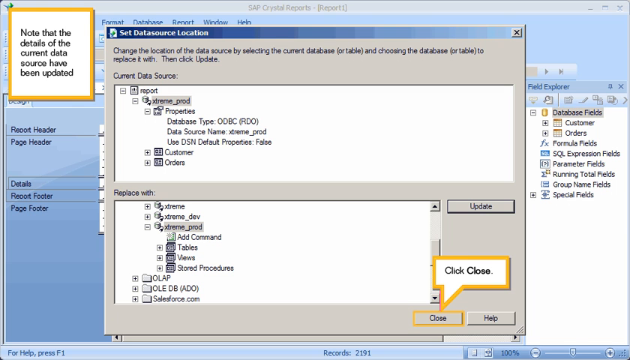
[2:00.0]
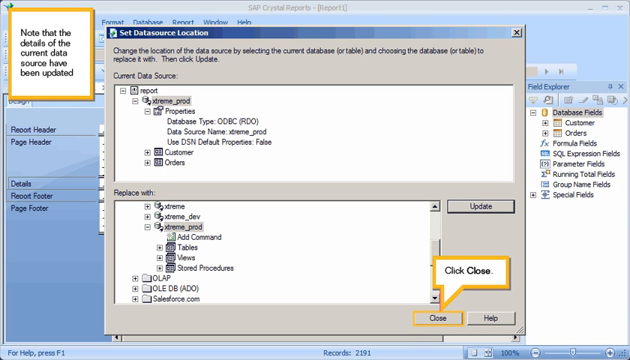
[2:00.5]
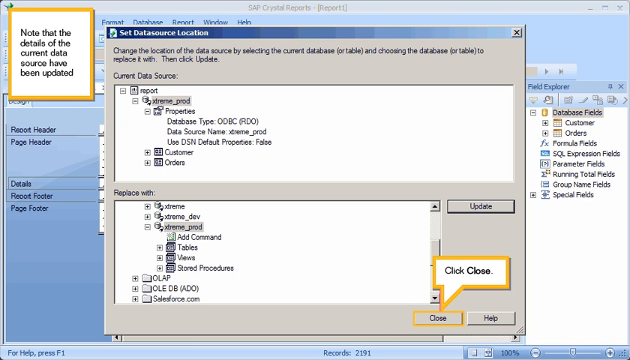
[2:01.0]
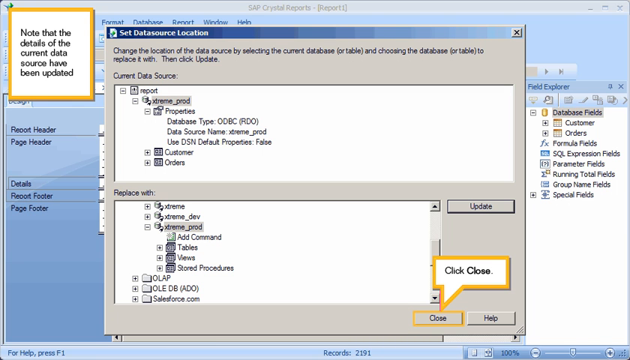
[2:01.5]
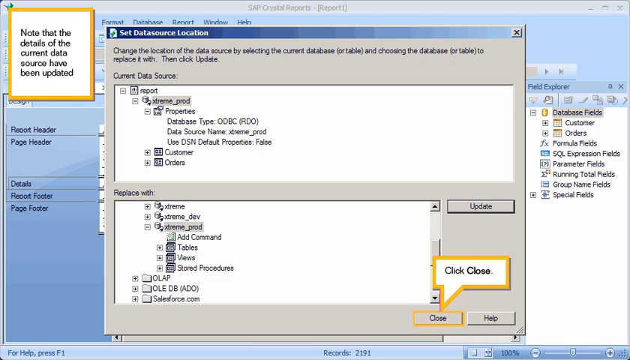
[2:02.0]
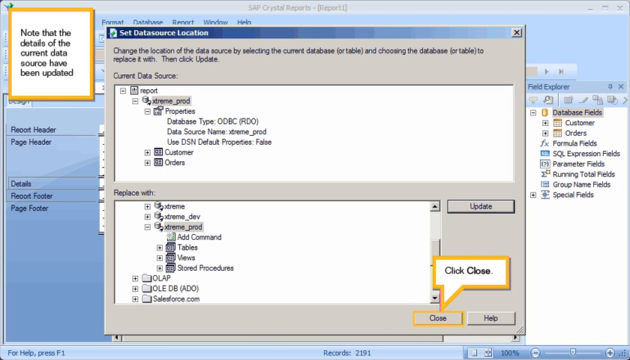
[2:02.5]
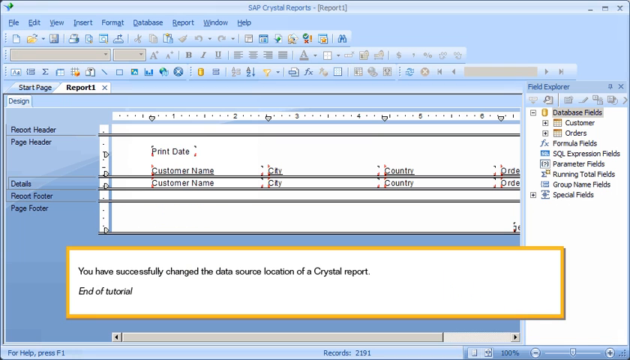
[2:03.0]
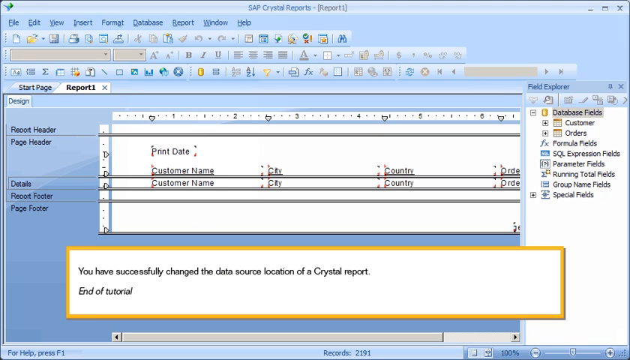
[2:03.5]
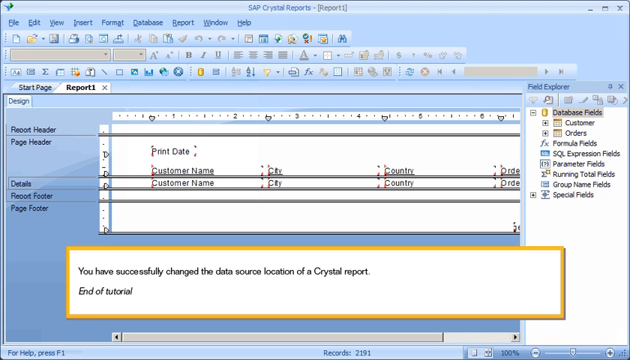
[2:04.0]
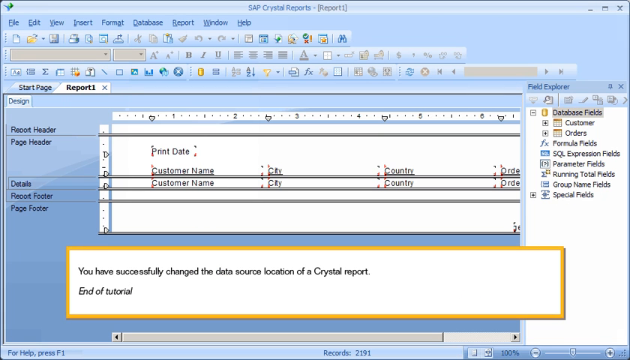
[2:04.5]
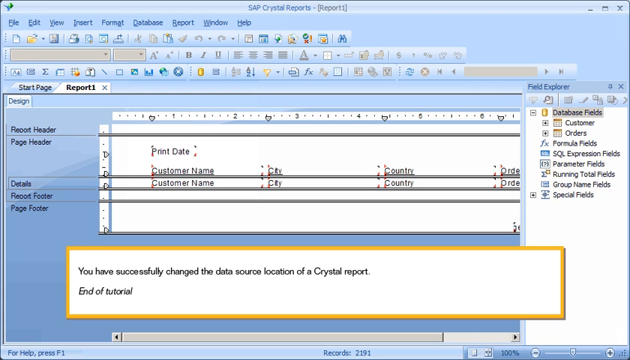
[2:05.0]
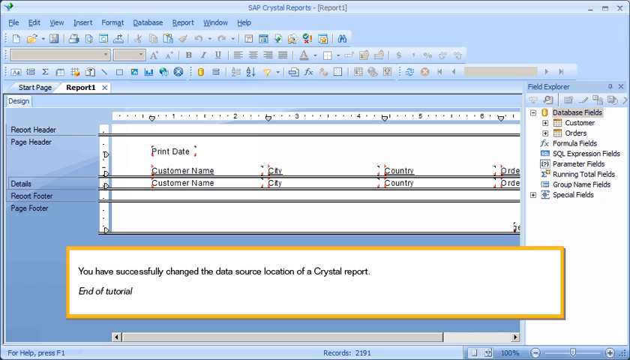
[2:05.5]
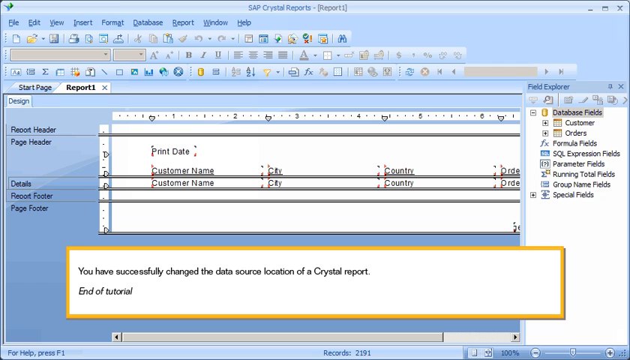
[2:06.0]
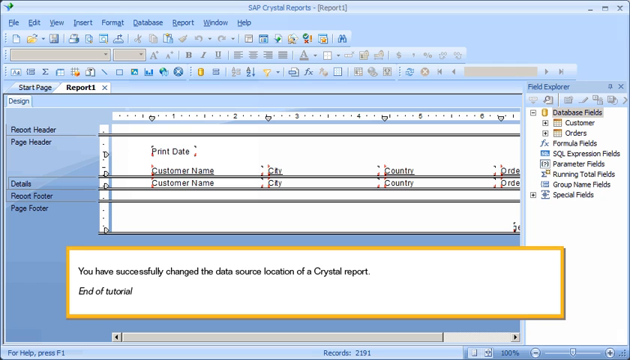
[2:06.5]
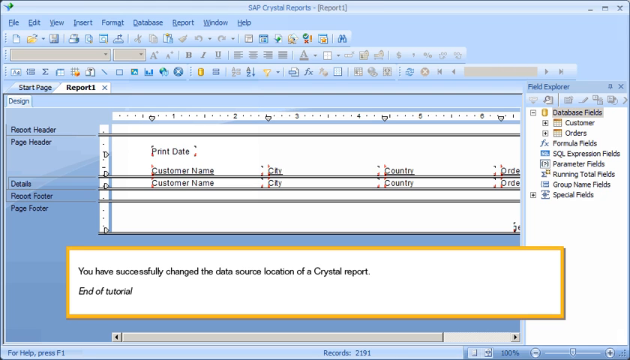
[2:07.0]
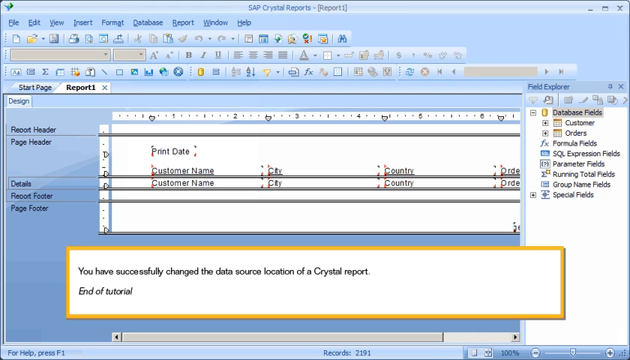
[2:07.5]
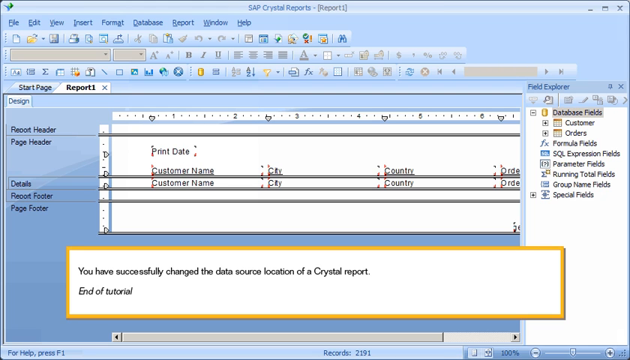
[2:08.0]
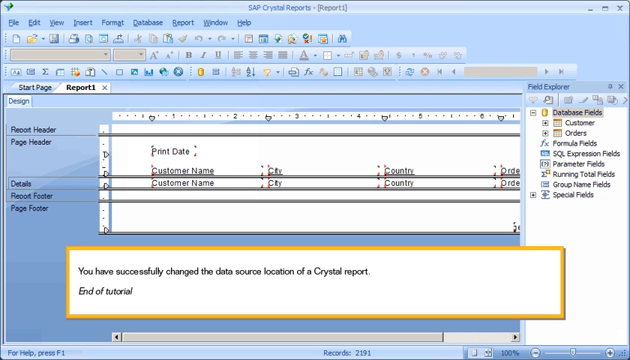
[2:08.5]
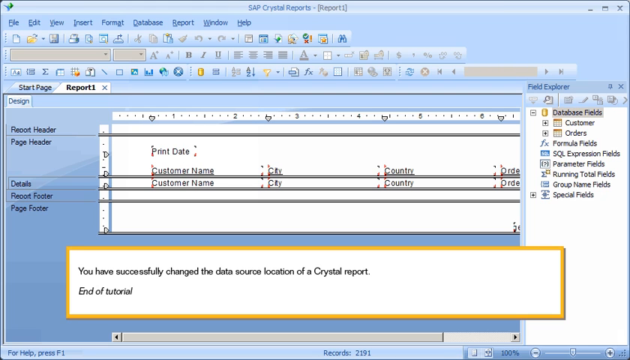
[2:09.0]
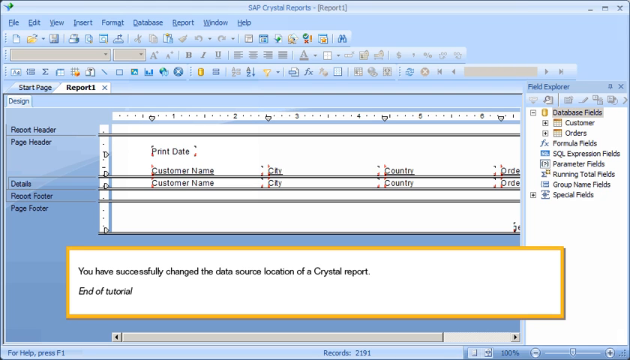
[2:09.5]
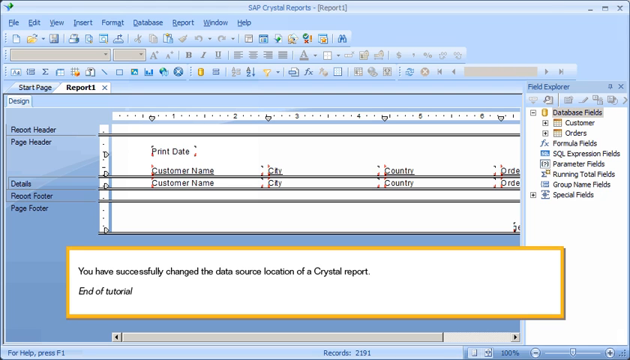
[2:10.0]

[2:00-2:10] The yellow-framed box in the upper left corner now reads "note that the details of the current data source have been updated." A box on the gray program window says "click close," pointing to the close button. The screen then changes, removing the gray selection choices and leaving a white dialog box framed in yellow that reads "you have successfully changed the data source location of a crystal report, end of tutorial," which remains on screen until the end of the video. The basic program window also stays open, with the menu items file, edit, view, insert, format, database, report, windows, and help across the top in blue, and centered above them "SAP Crystal Reports (report)." The vertical rectangular text box remains visible, along with a horizontal text box stating print date, customer name, city, country, and order, which then repeats. On the far left-hand side of the program are report header, page header, details, report footer, and page footer.